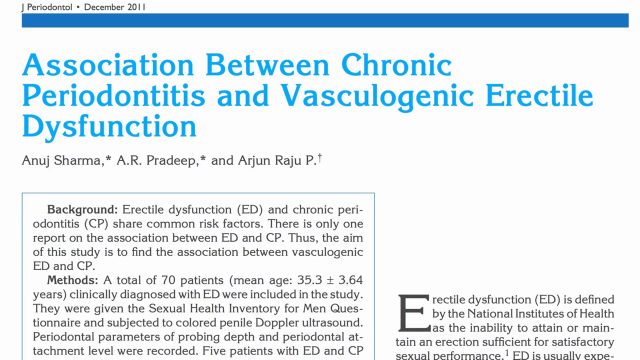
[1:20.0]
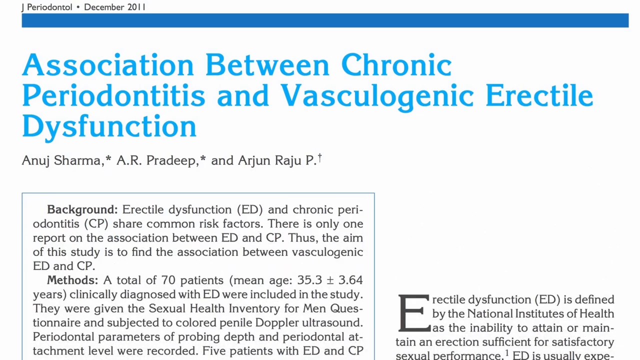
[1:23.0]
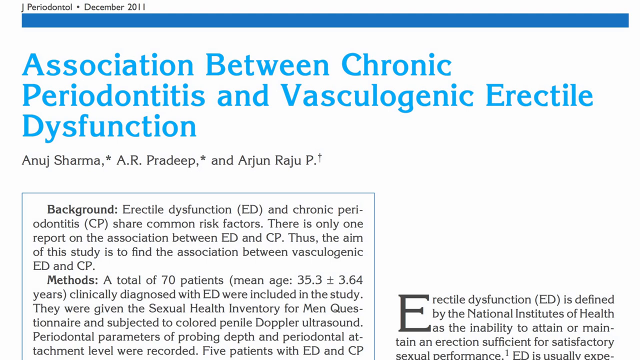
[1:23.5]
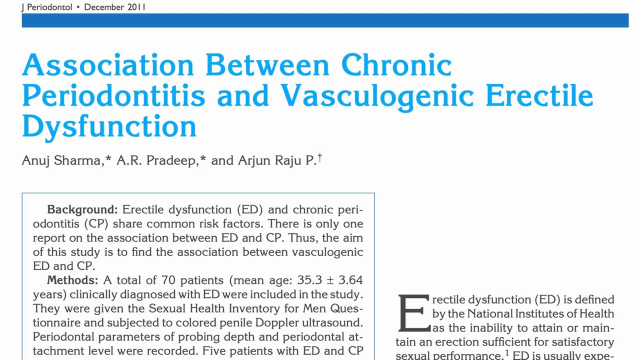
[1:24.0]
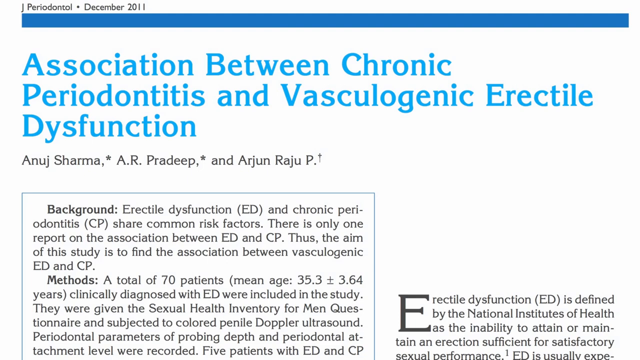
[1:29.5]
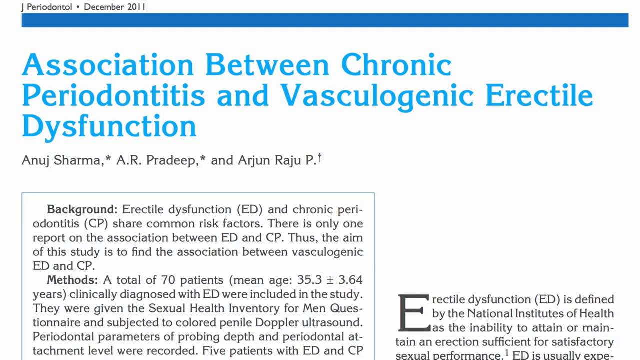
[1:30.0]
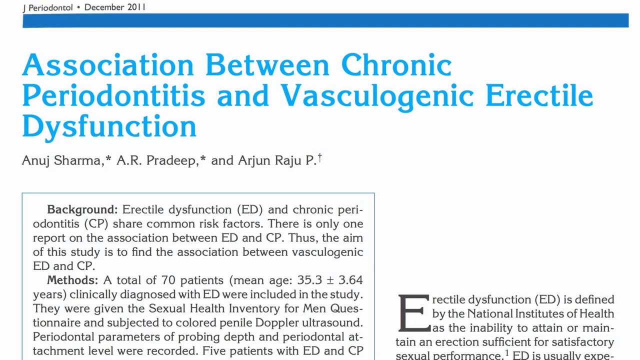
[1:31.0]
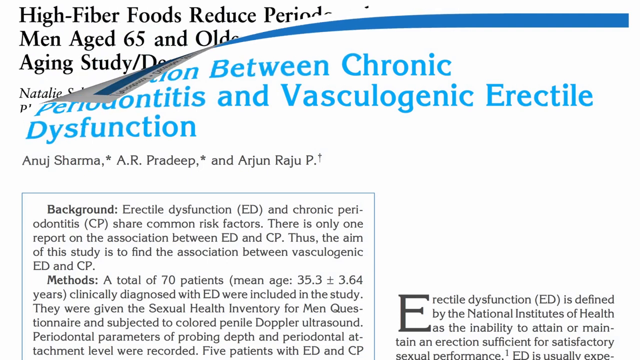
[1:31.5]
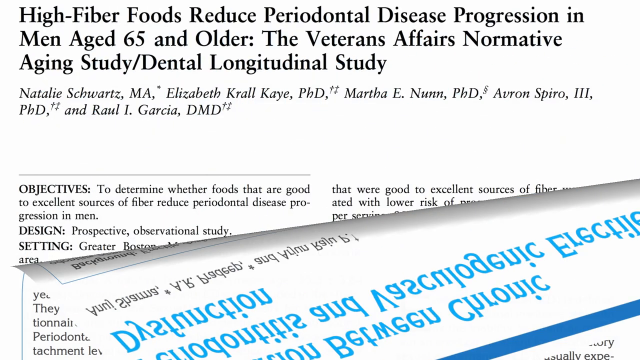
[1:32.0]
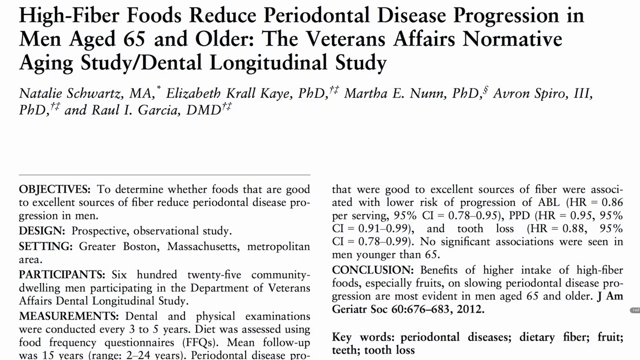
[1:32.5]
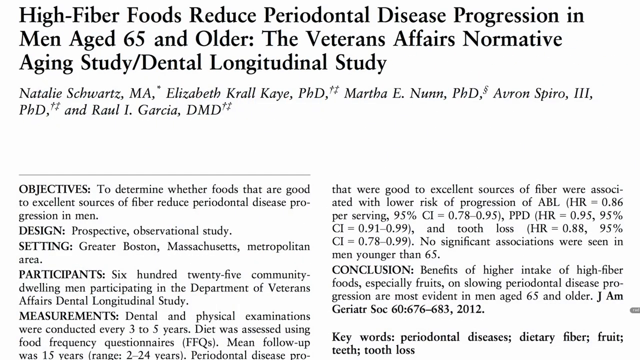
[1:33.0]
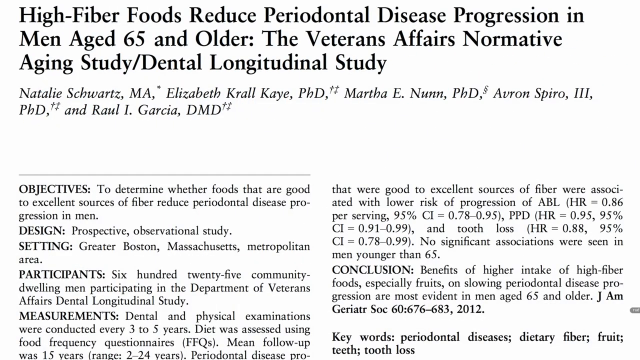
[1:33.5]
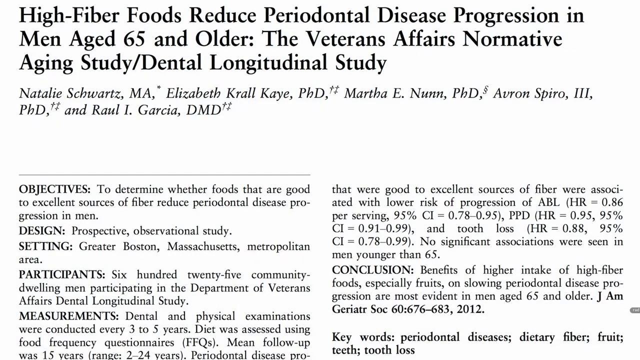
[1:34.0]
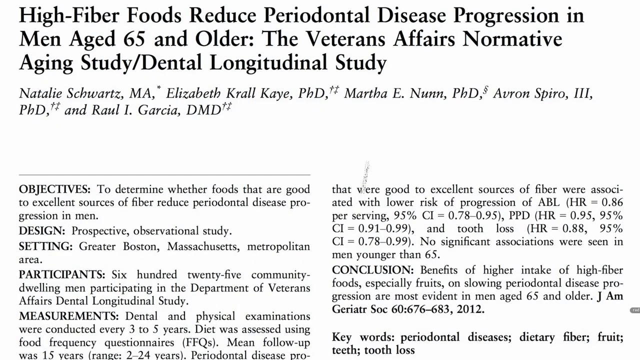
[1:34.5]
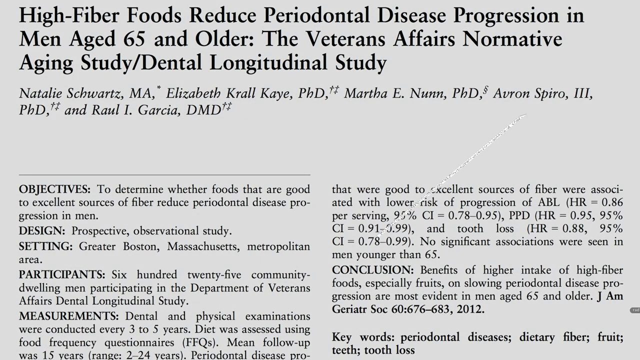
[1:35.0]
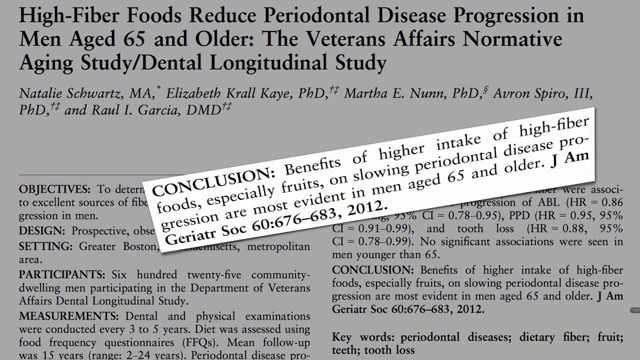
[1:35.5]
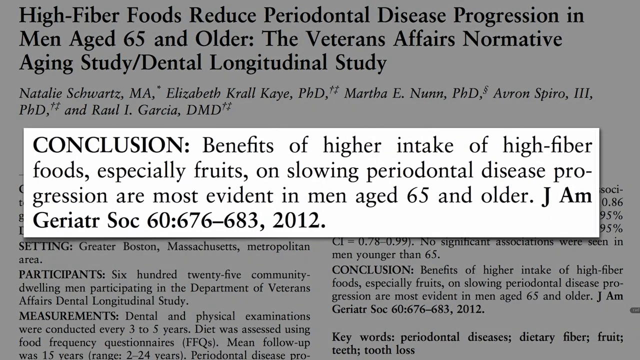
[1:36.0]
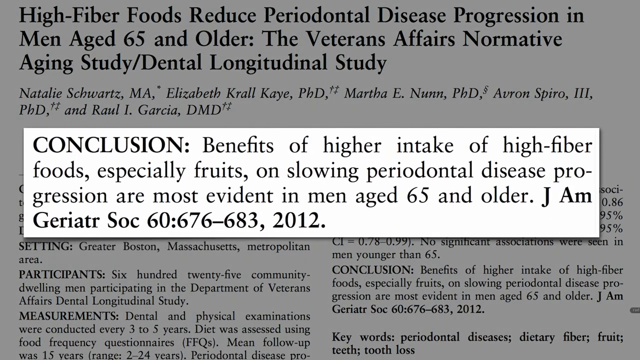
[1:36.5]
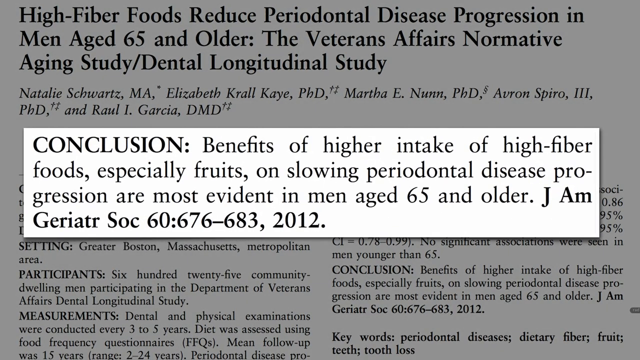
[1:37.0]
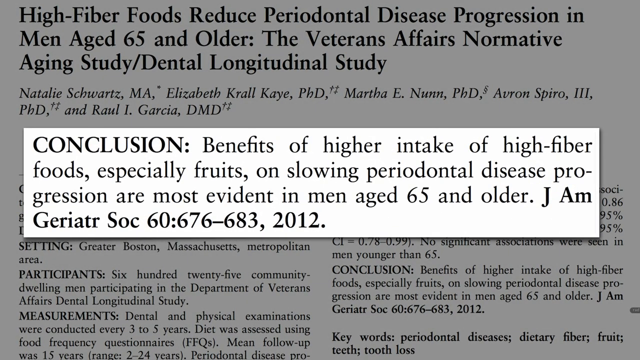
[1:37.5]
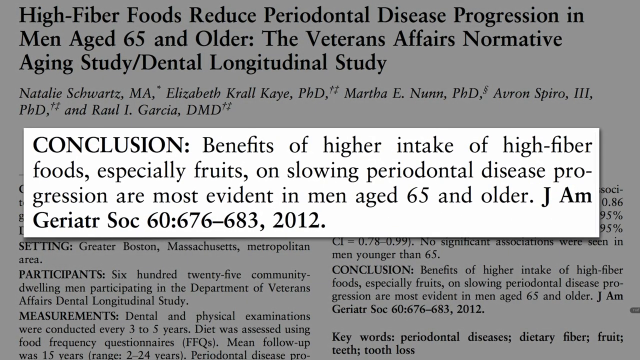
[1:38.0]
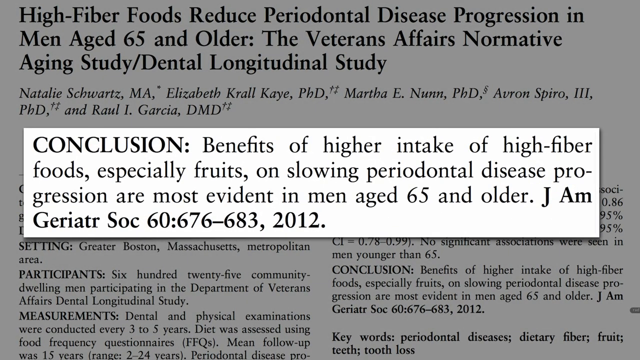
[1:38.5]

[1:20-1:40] The blue-lettered article on the association between chronic periodontitis and vascular genic erectile dysfunction continues. Its background section notes shared common risk factors and reports of an association between ED and CP, and its methods section refers to a total of 70 patients clinically diagnosed with erectile dysfunction who were included in the study. Then it looks like the video returns to the main article, where text reads "conclusion benefits of higher intake of high fiber foods, especially fruits on slowing the periodontal disease progression are most evident in men age 65 and older." A citation reads J.M. Geriater Soc 60, 676-683, 2012. The text also mentions the Veterans Affairs Normative Aging Study and Dental Longitudinal Study.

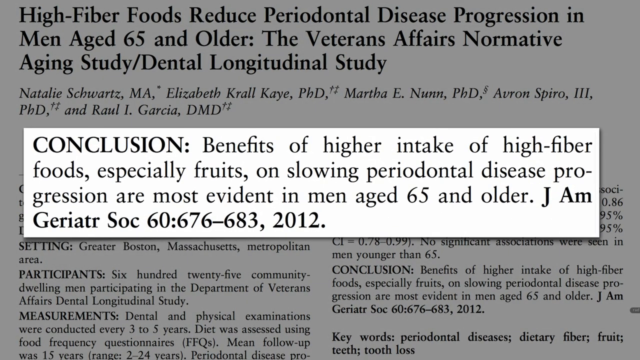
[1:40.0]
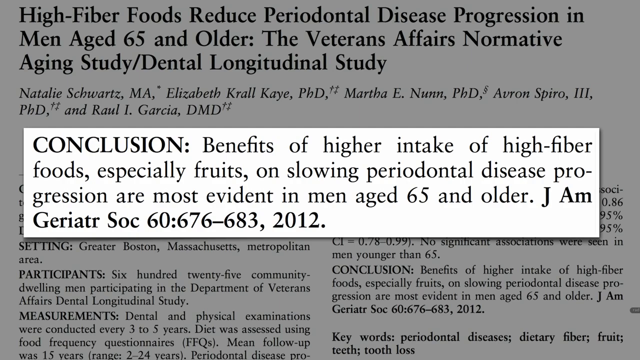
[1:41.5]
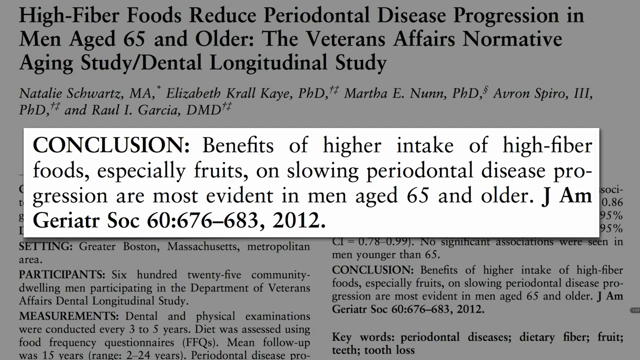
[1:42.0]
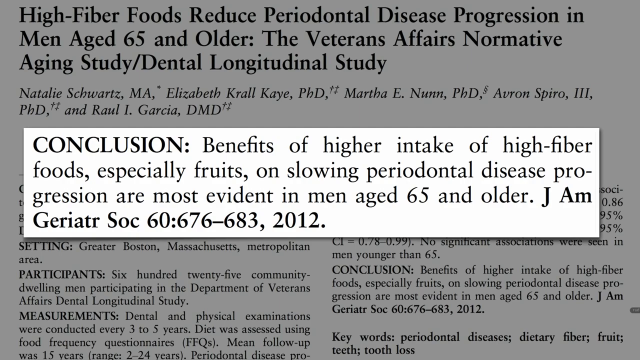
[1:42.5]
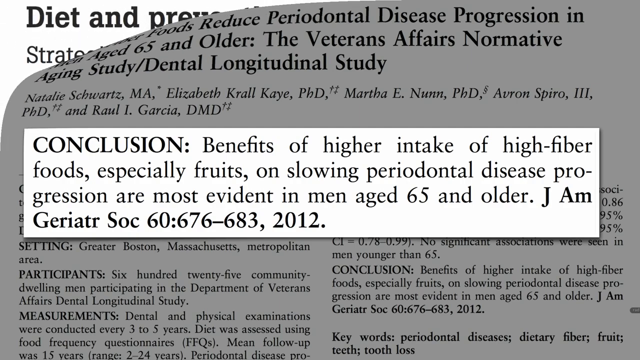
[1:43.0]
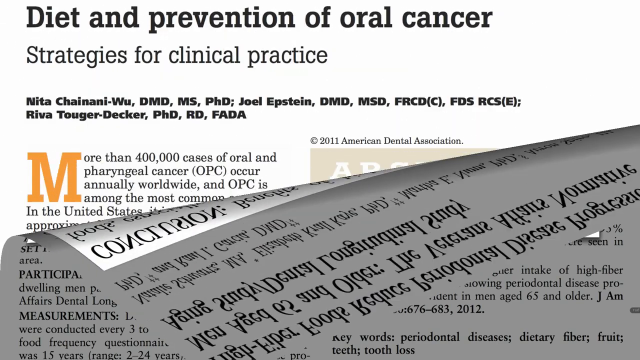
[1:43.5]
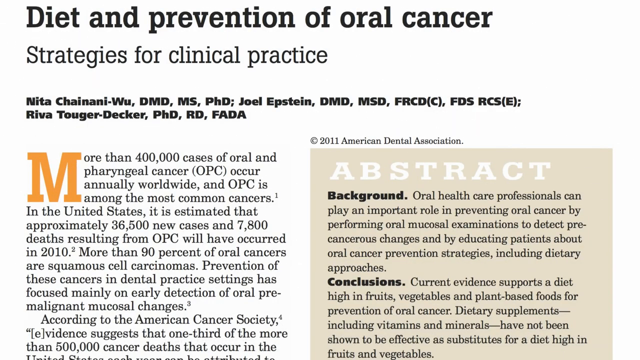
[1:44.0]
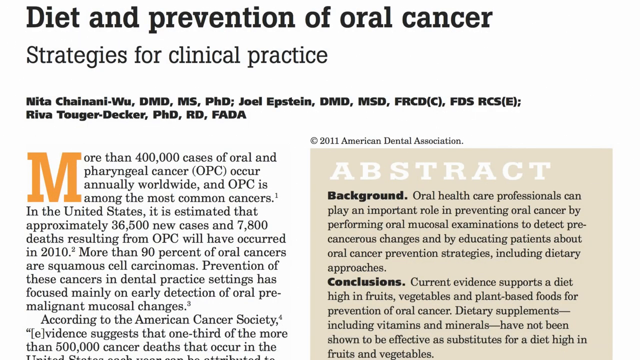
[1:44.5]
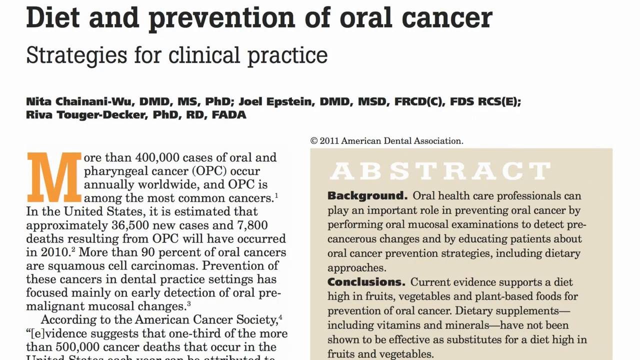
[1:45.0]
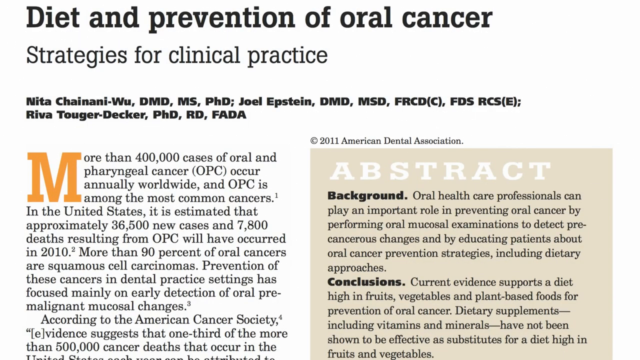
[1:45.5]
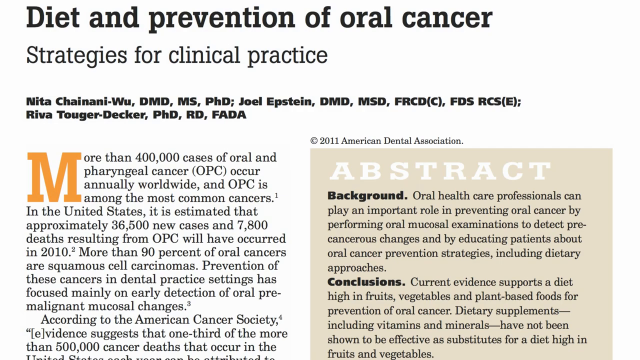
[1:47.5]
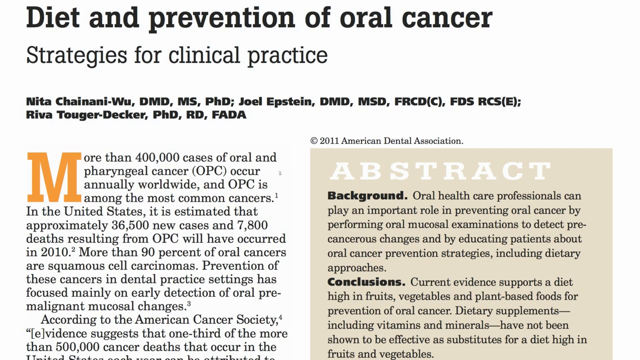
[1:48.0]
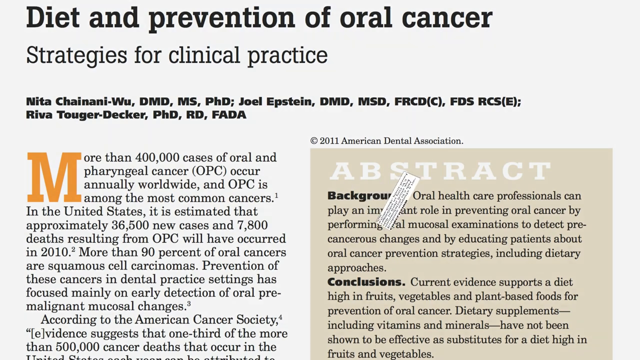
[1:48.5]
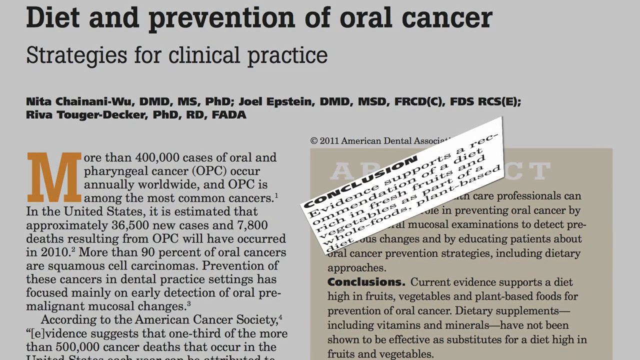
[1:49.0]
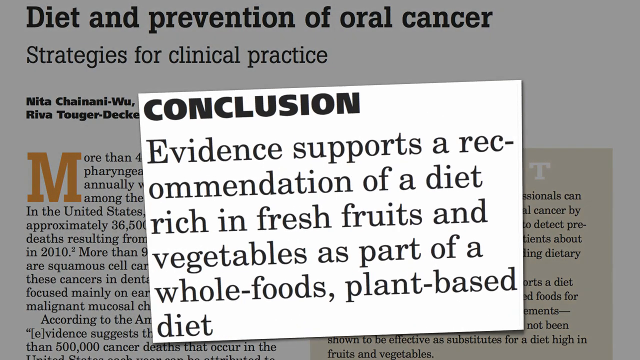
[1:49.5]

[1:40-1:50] The conclusion label about higher intake of high fiber foods and fruits slowing periodontal disease progression in men aged 65 and older remains on screen. Next, an article titled "diet and prevention of oral cancer: strategies for clinical practice" appears, with a big letter M starting its first word. It reads that more than 400,000 cases of oral and pharyngeal cancer (OPC) occur annually worldwide, and its background says oral health professionals can play an important role. Another white label pops up reading "conclusion evidence supports recommendation," with something about recommending fruits and vegetables.